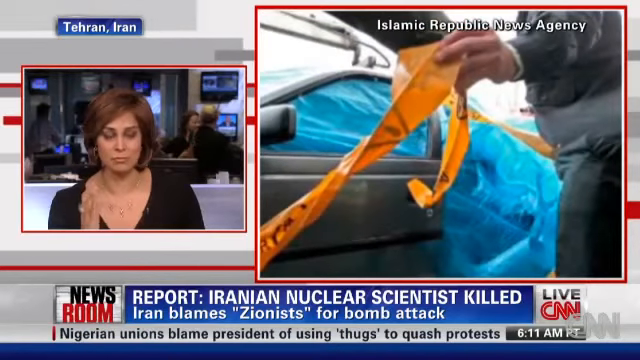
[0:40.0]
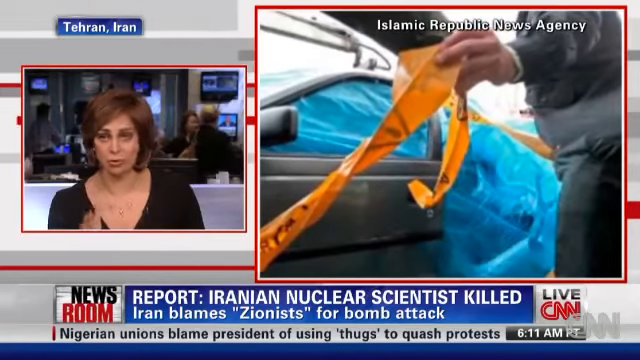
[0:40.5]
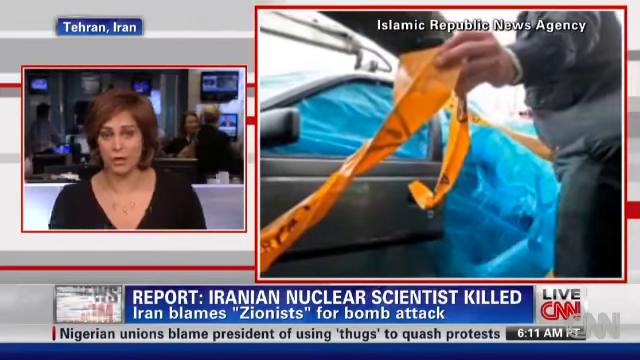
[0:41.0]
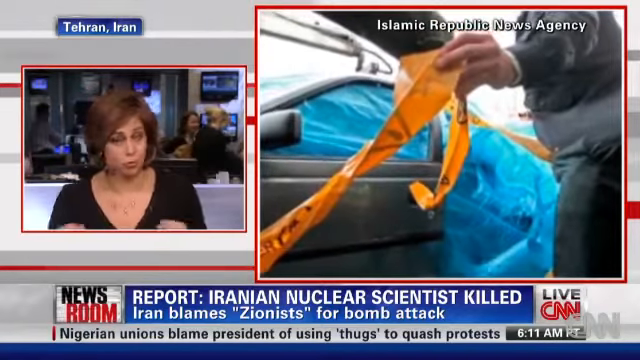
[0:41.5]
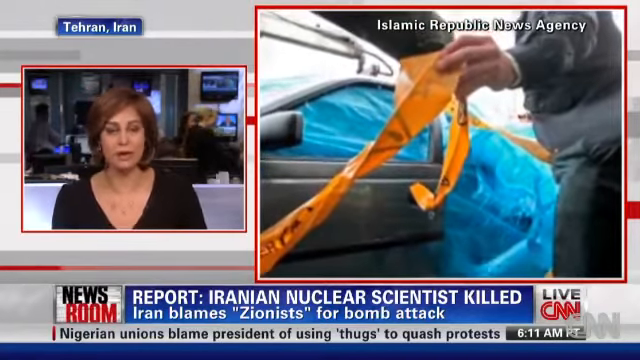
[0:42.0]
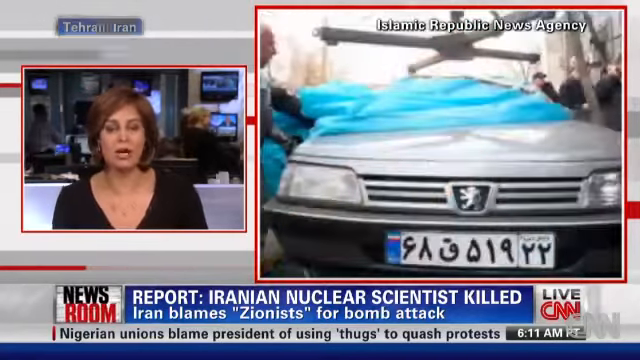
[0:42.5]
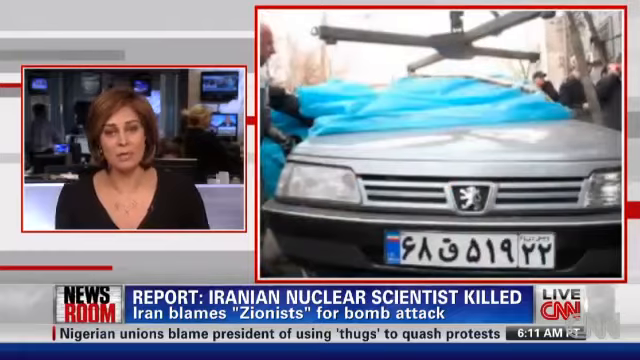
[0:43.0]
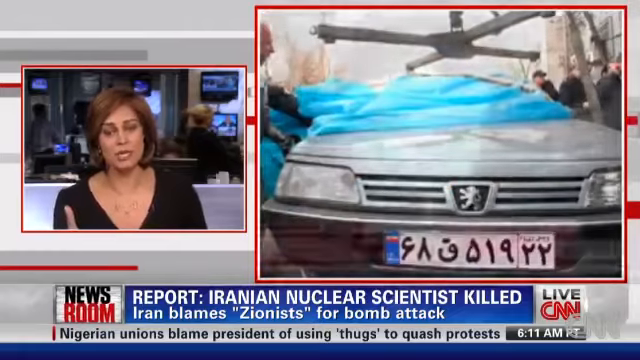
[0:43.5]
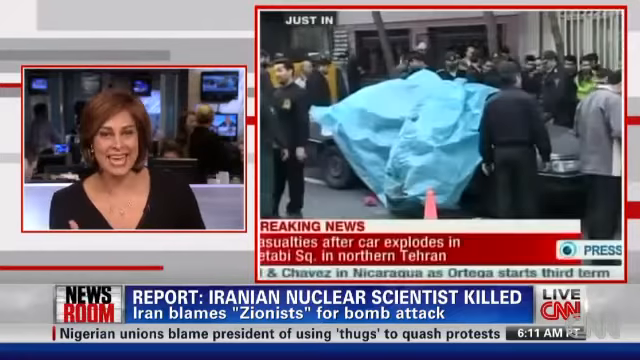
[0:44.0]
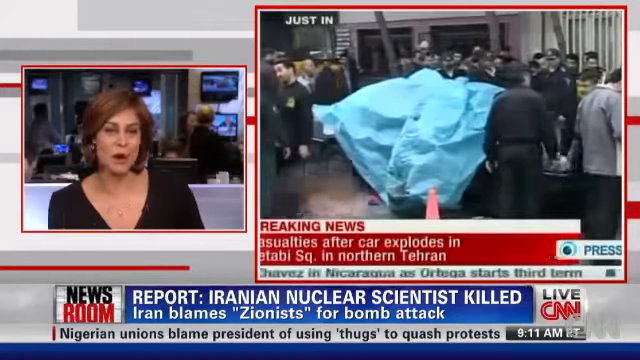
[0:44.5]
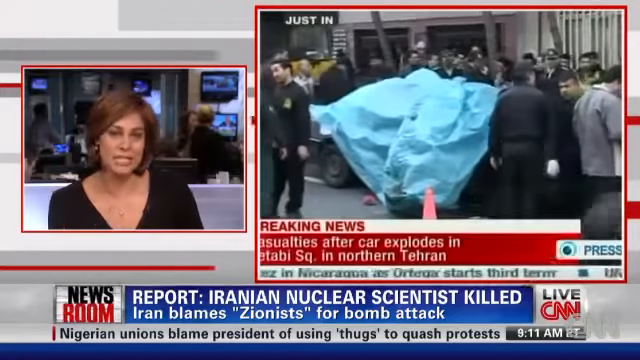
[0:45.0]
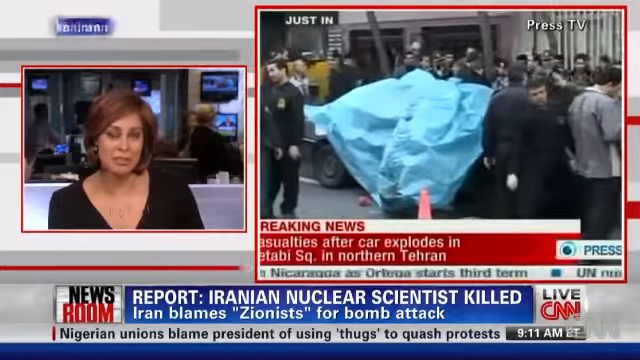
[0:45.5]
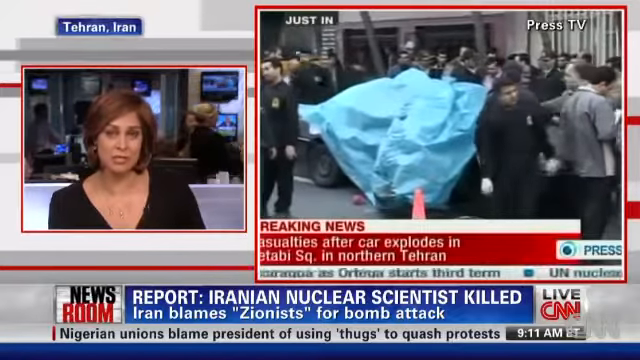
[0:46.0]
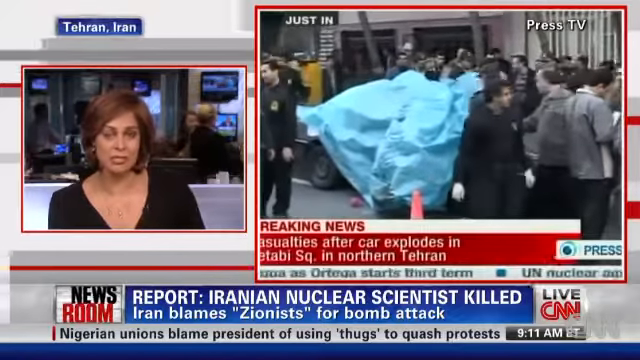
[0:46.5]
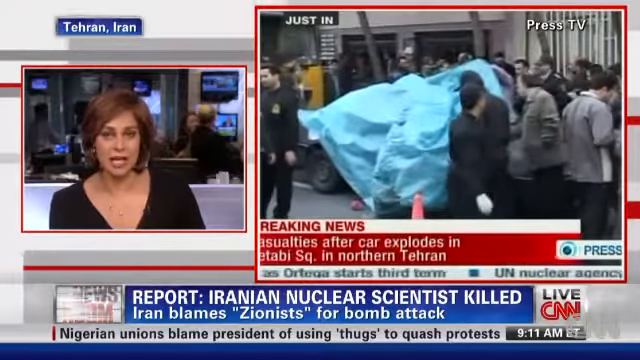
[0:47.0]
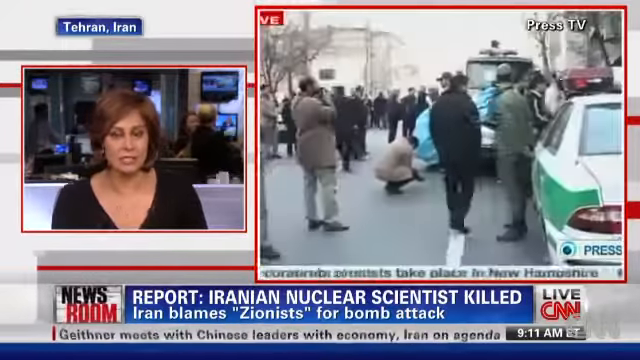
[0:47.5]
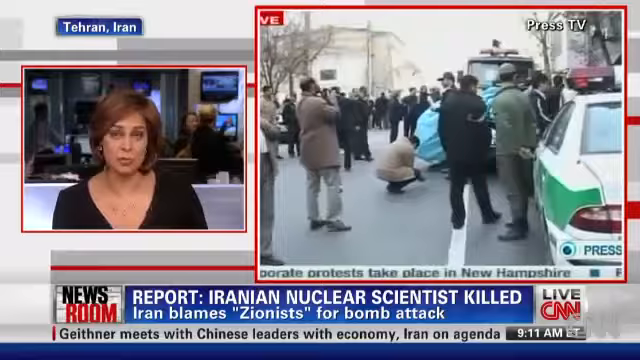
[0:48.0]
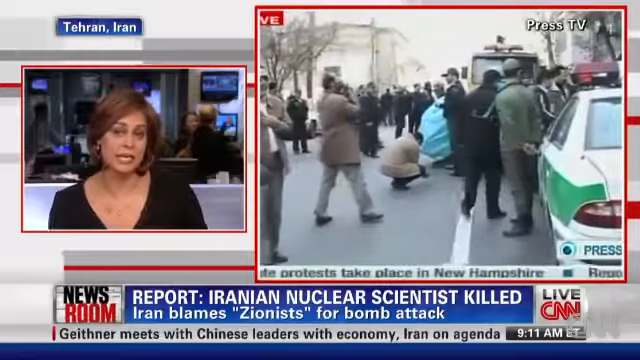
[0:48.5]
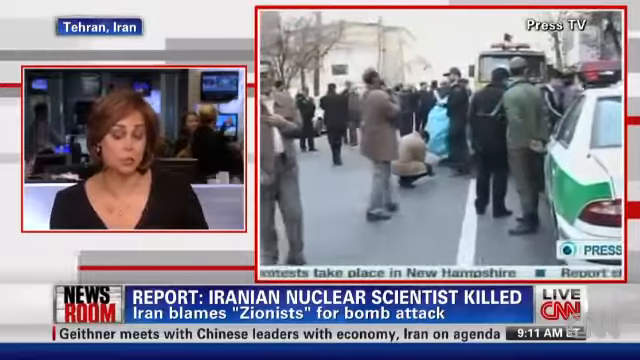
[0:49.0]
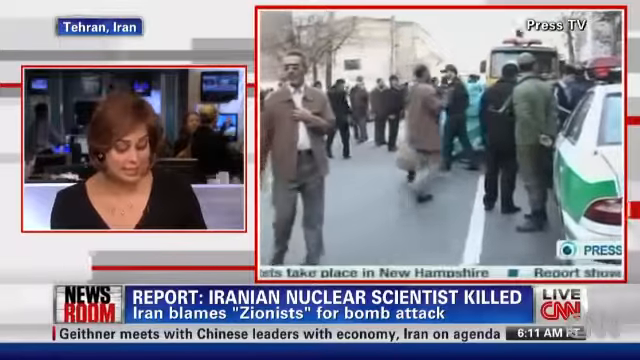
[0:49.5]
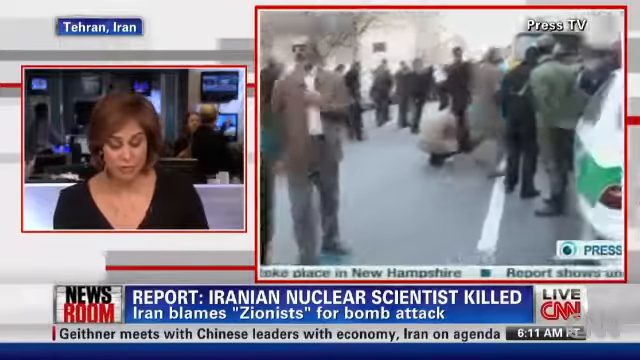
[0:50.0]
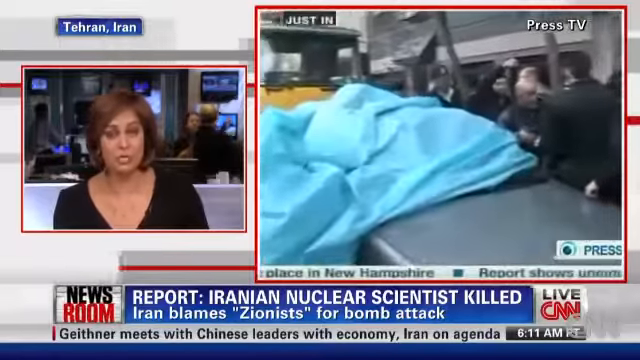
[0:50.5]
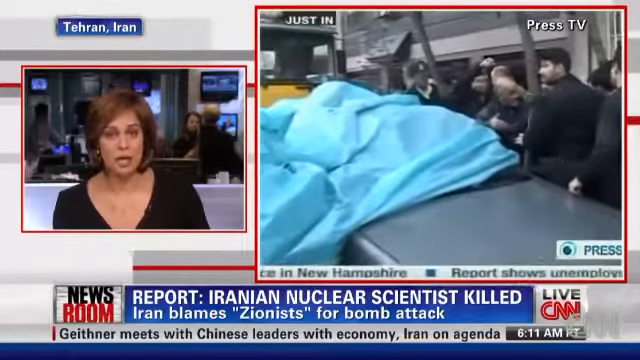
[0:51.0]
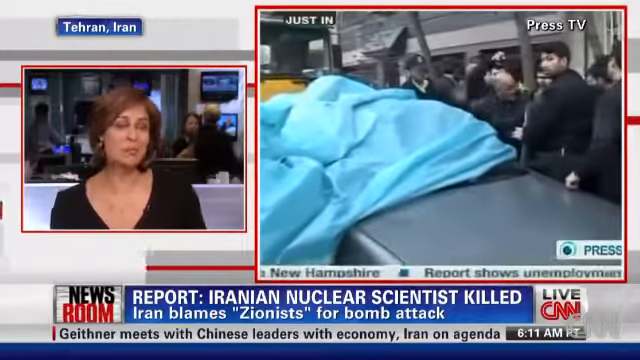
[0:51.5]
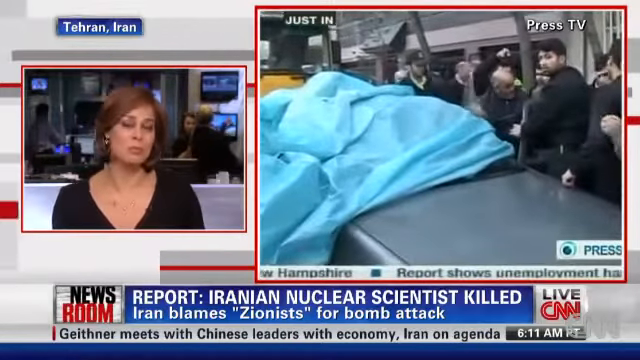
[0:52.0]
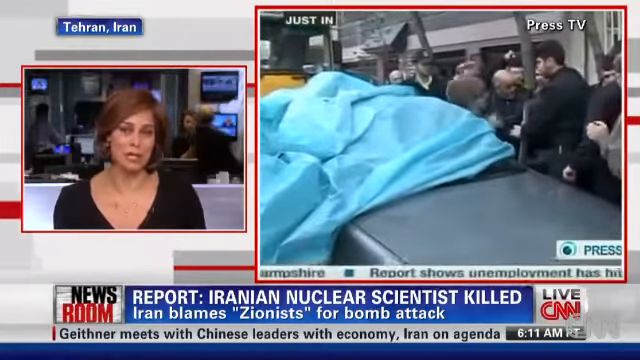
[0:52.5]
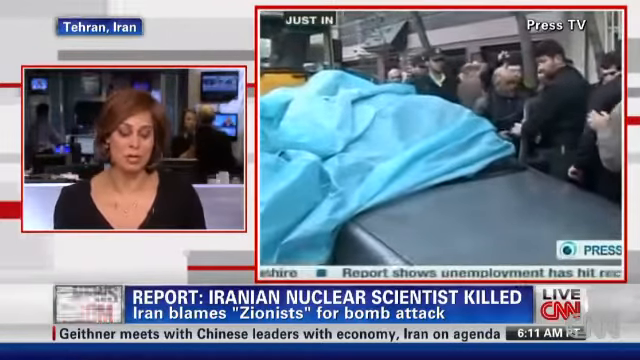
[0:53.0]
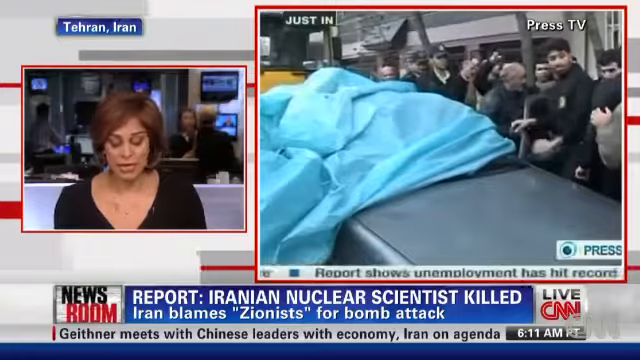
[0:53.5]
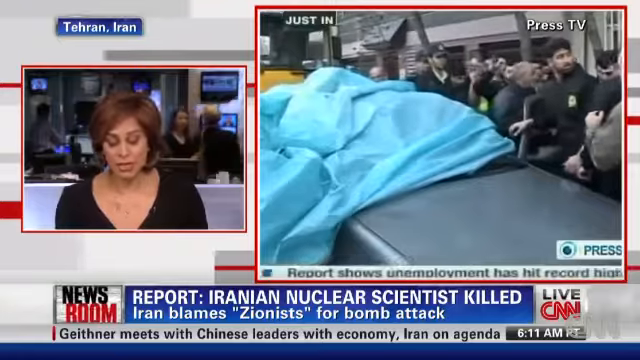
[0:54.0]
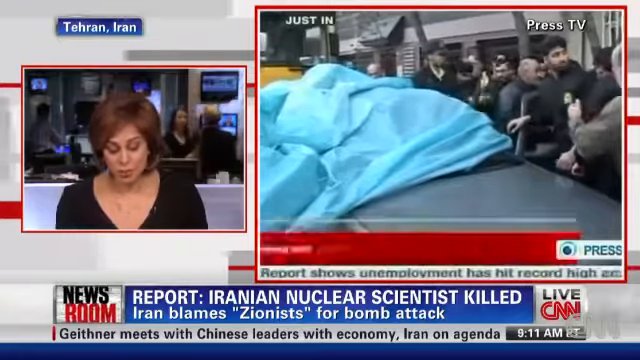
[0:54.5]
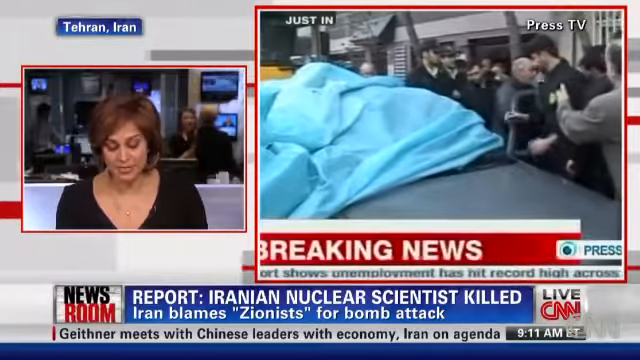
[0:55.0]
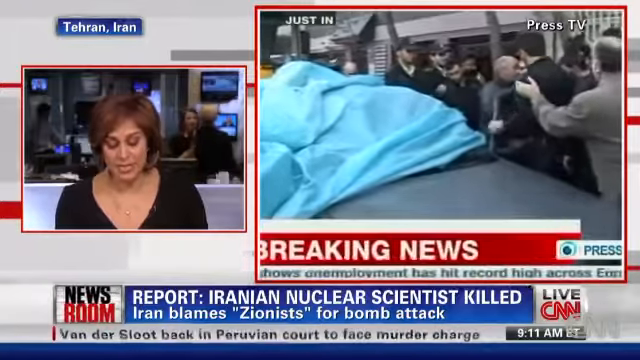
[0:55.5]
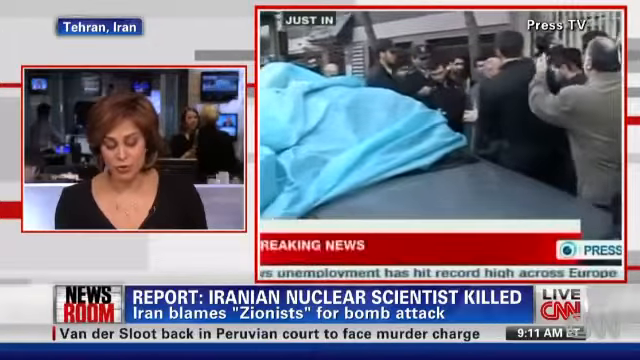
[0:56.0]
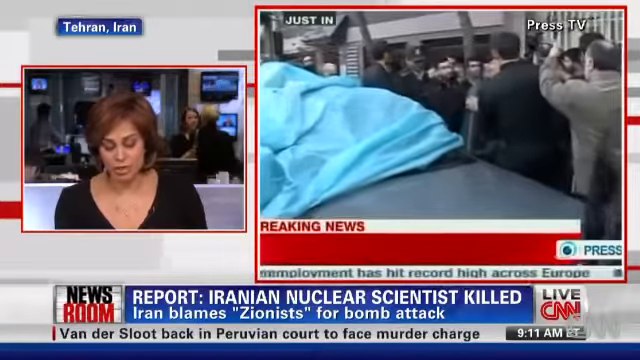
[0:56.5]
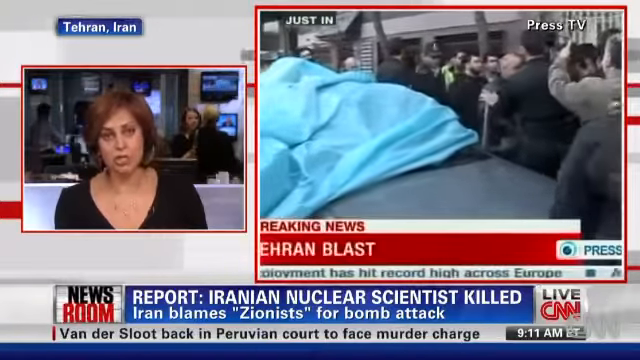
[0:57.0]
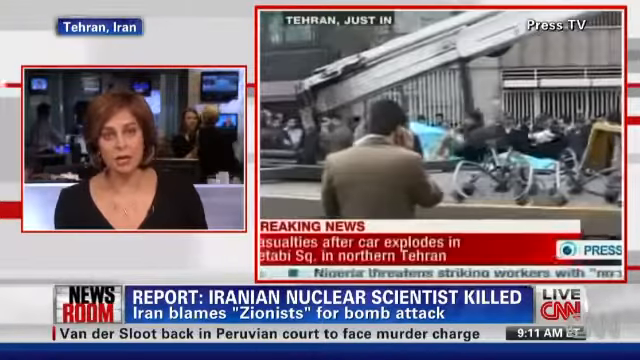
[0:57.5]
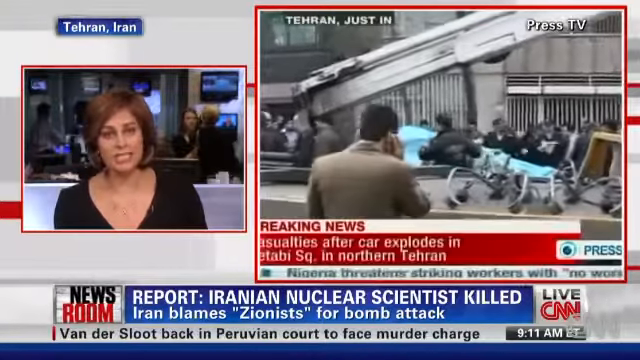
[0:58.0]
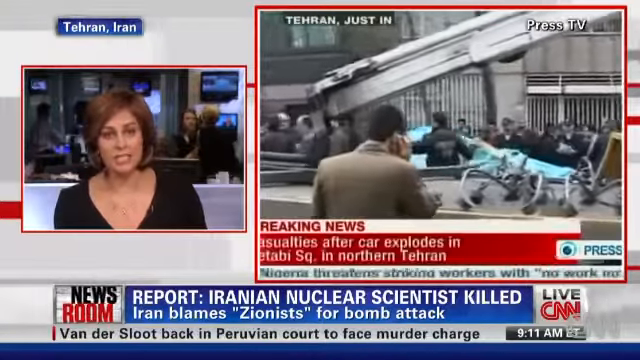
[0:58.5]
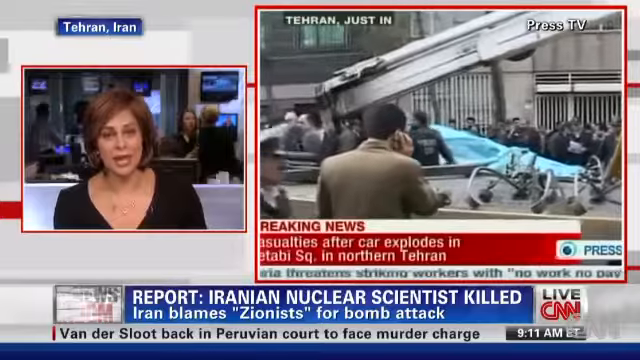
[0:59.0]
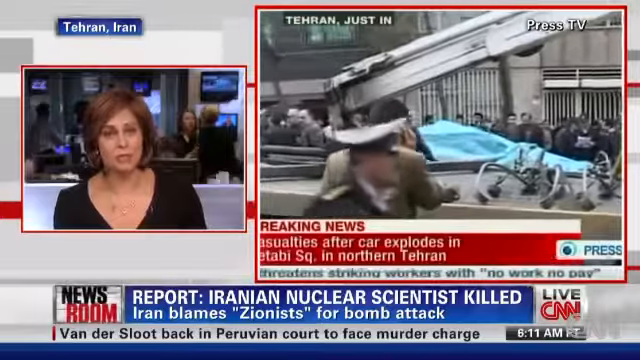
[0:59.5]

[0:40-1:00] Many people are at a scene where a car is covered in blue, and there are many journalists there. Some people are wearing gloves on their hands and seem to be perhaps from the police department. The text "Press TV" is in the top right corner. The woman in the black top continues reporting about the killing, which seems to be happening in Tehran, Iran. The scene seems to be in front of buildings, possibly in the middle of the city.